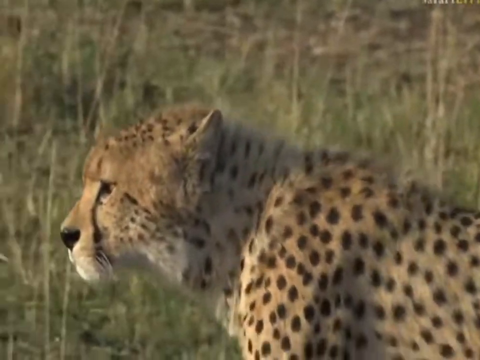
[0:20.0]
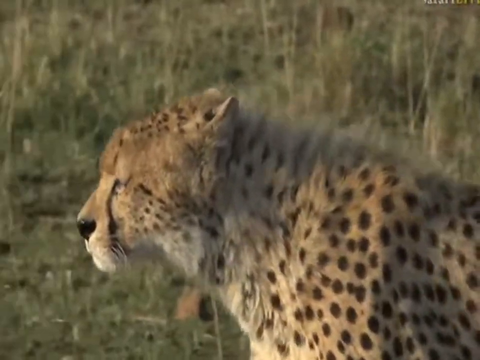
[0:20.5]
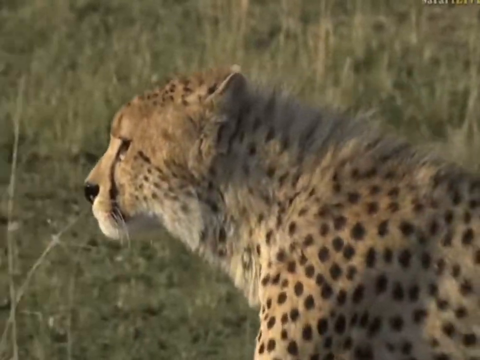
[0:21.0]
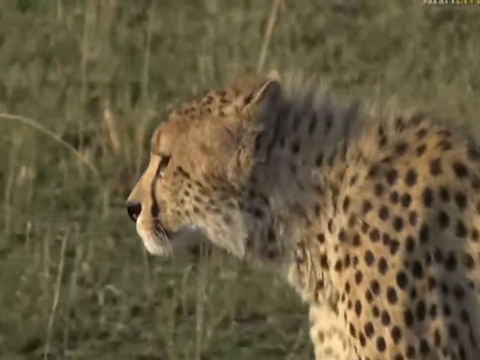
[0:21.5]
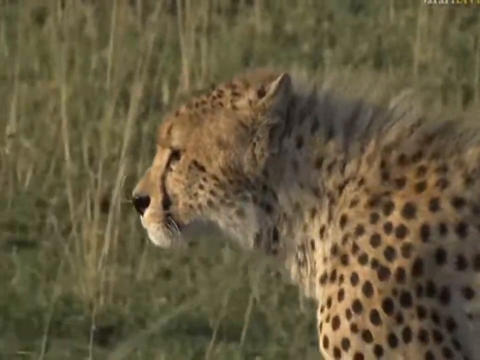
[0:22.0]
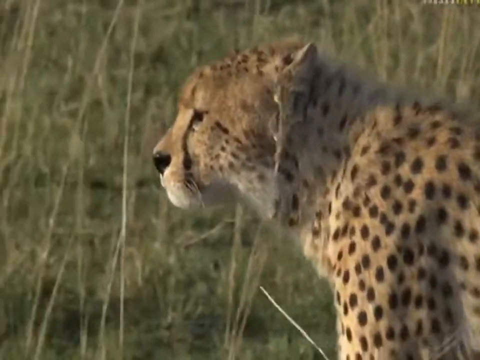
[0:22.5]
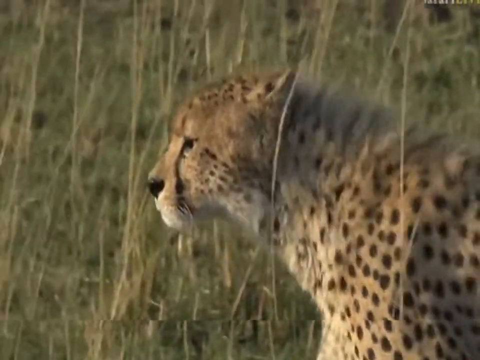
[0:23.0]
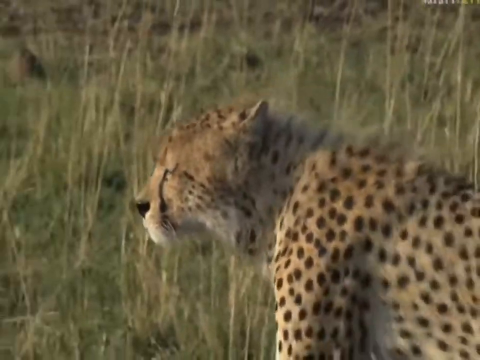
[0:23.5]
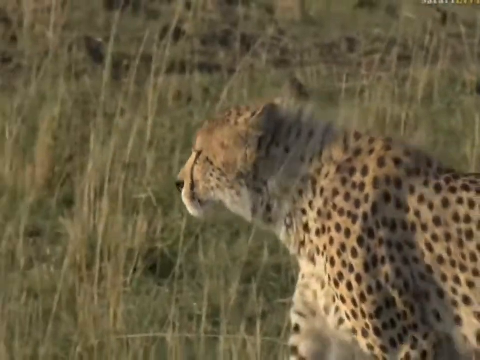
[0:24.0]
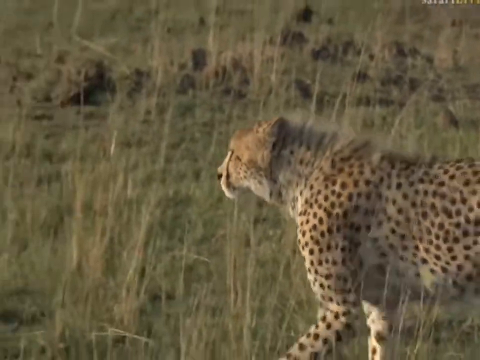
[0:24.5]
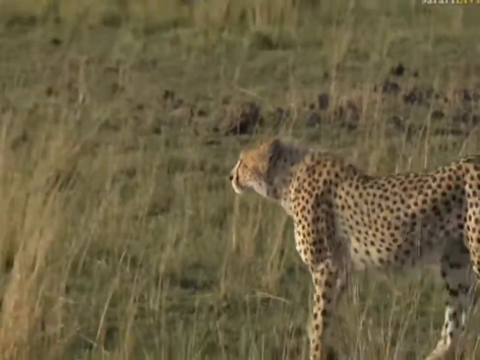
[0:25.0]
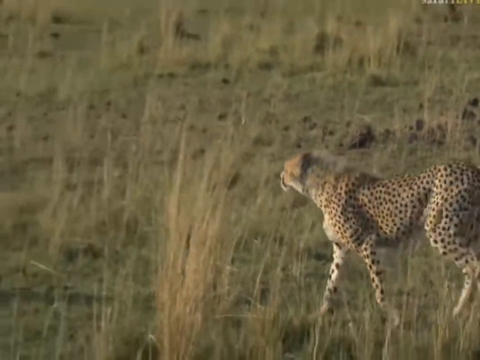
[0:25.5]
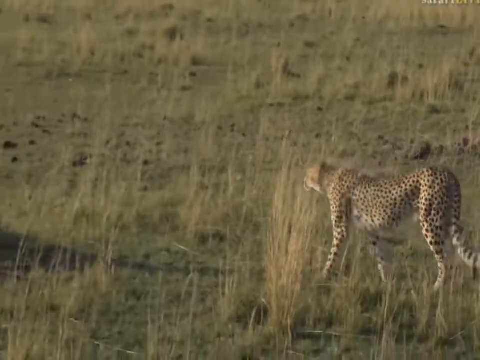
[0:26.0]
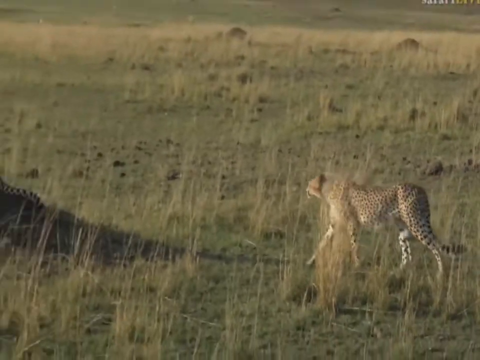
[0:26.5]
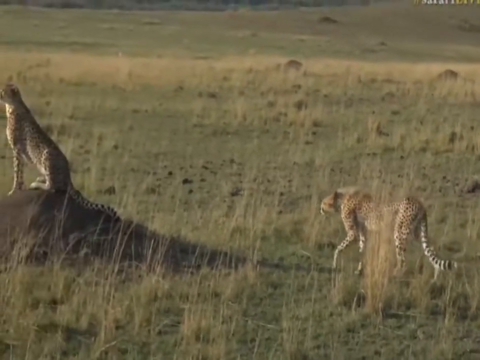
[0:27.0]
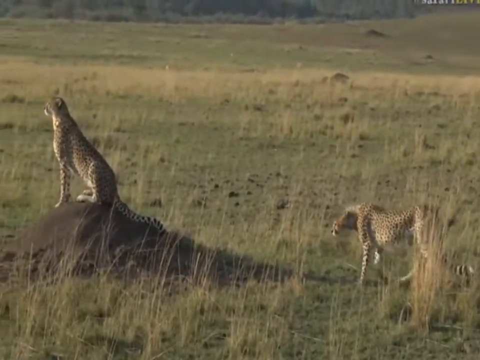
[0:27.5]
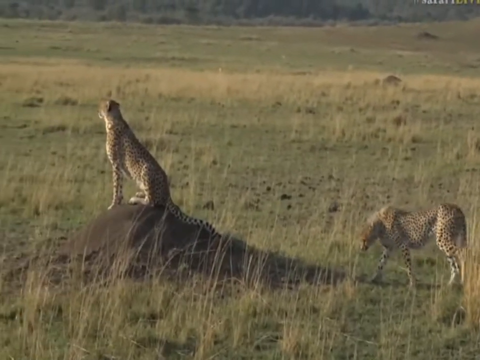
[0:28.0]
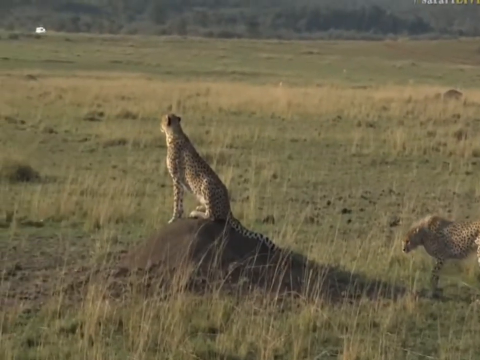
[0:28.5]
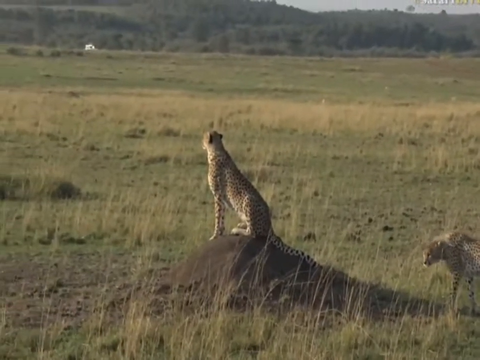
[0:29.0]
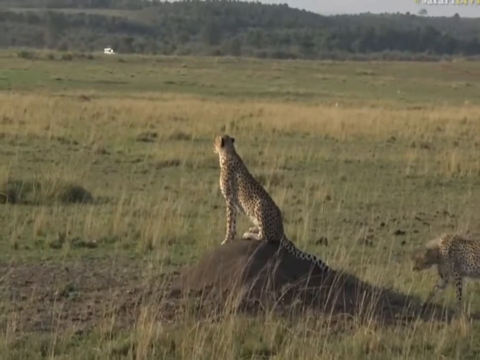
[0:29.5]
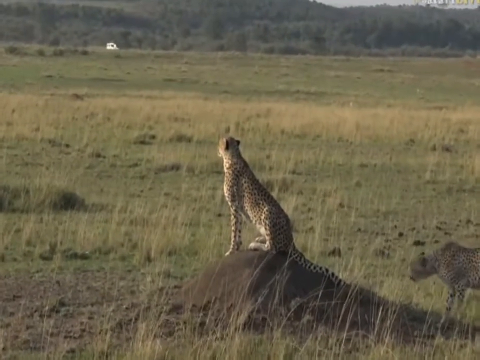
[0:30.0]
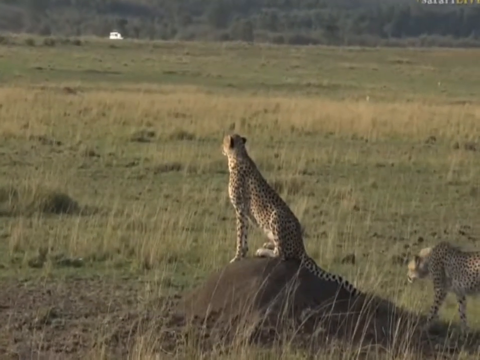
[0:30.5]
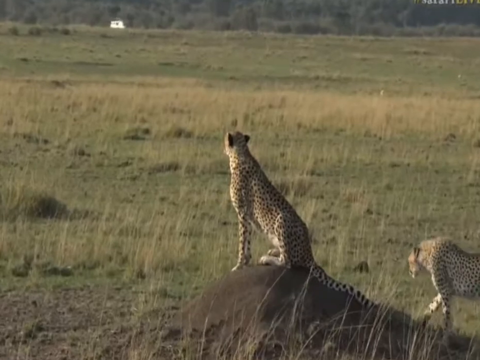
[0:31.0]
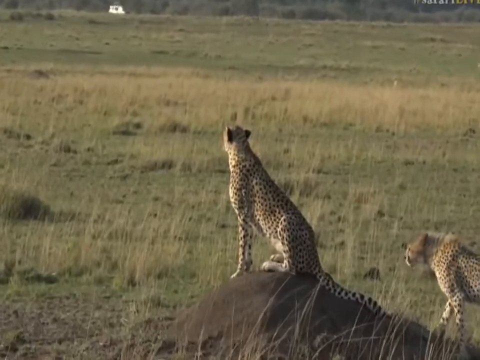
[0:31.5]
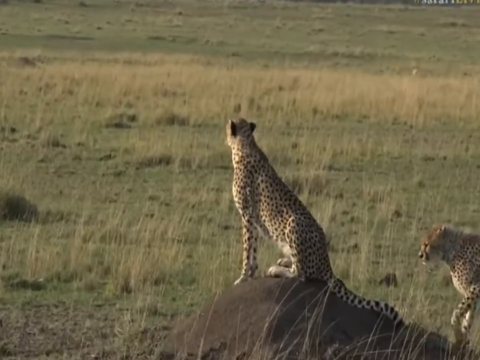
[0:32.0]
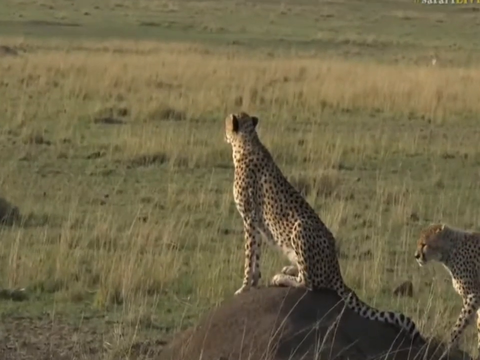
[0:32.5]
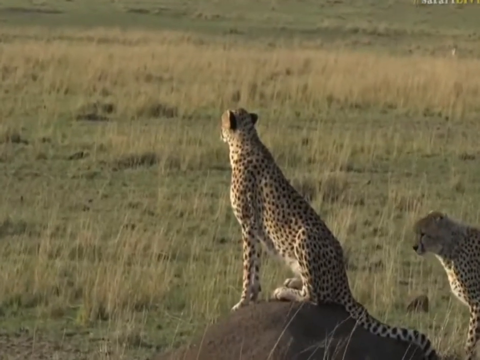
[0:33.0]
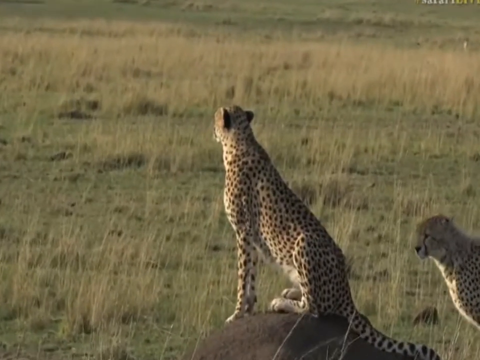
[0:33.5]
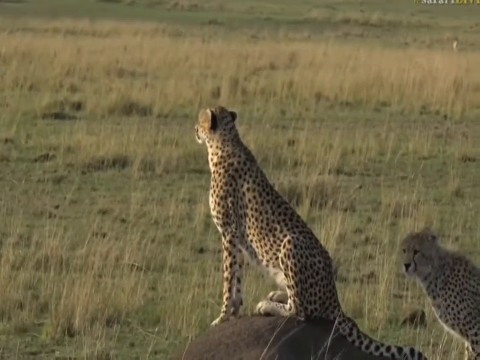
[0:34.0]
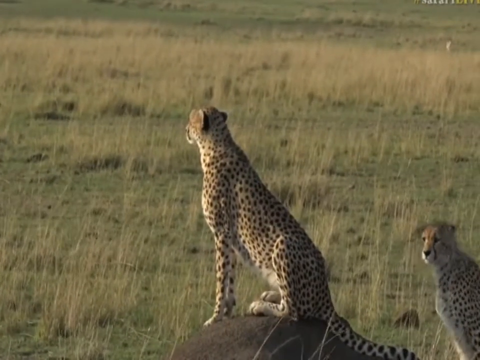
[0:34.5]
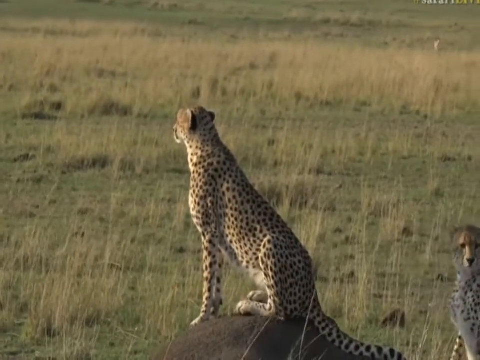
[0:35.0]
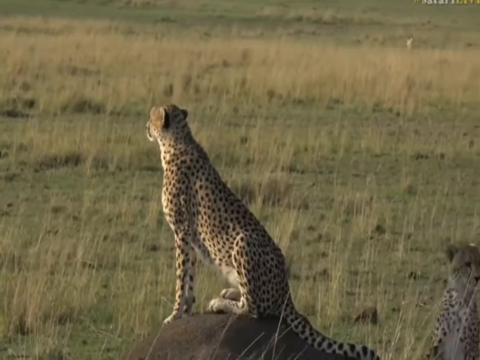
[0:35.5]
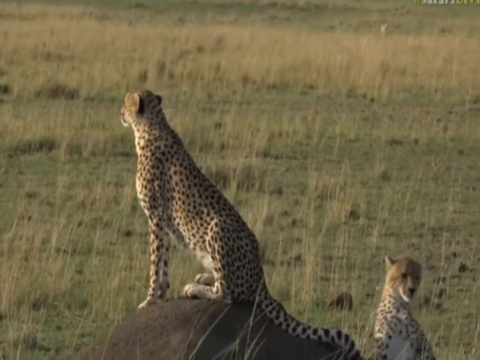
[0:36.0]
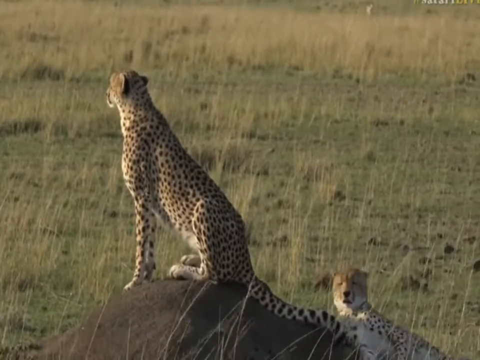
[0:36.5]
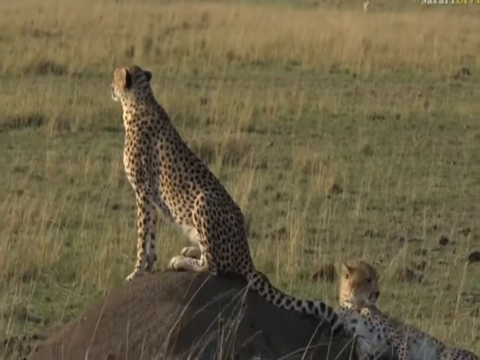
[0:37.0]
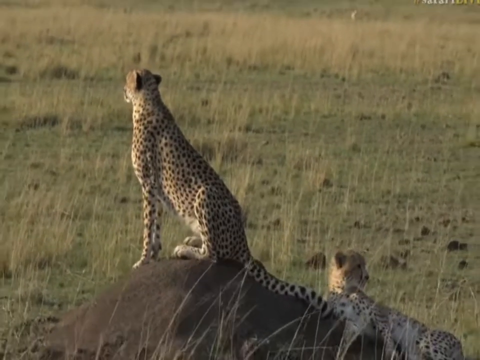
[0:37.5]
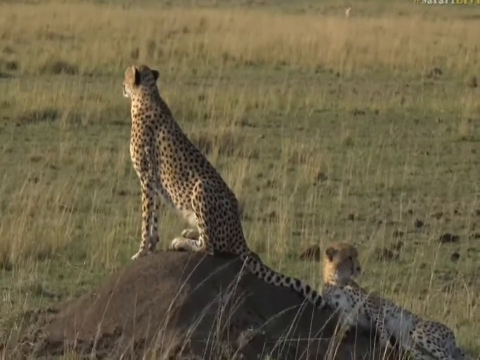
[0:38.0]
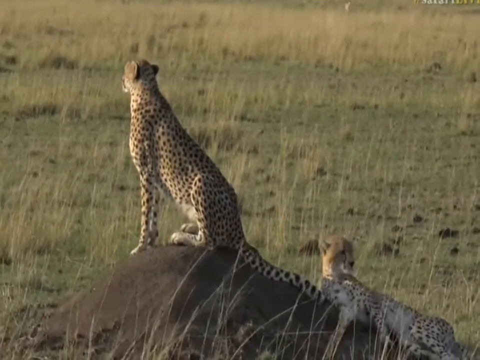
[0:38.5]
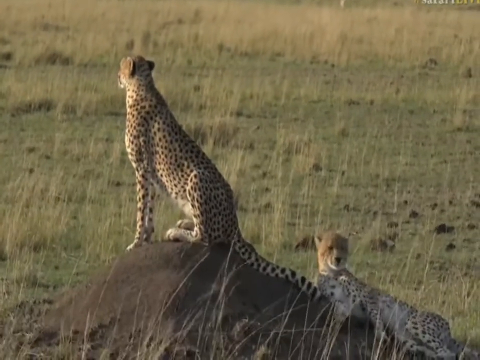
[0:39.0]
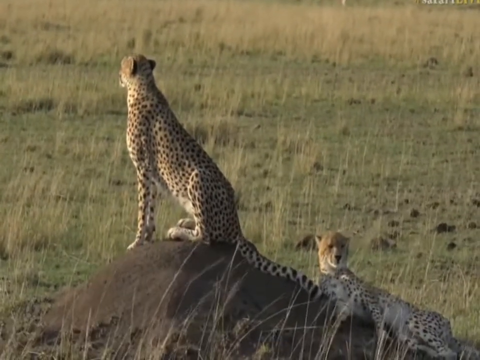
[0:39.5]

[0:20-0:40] The shot is zoomed in on the head of the leopard as it continues to walk and look around. It blinks a couple of times, looking off into the distance. The camera then moves toward the left; the leopard is still walking on the right, while at the far left another leopard sits at the top of a tiny hill with its tail hanging down the hill, looking toward the left side of the screen. A car or some kind of van drives by in the background, and the sitting leopard appears to turn its head a bit toward it. The original leopard comes up behind it, sits down behind it, then lies down at the bottom of the hill on the right side and looks around a bit.